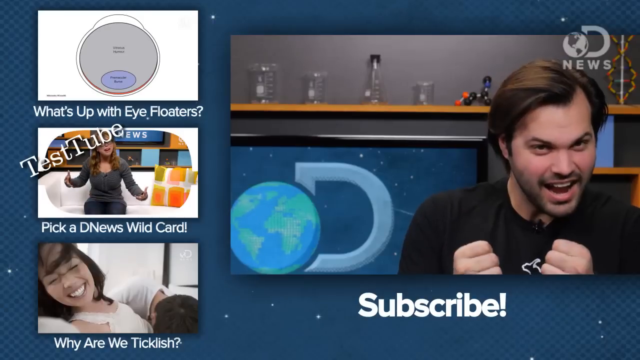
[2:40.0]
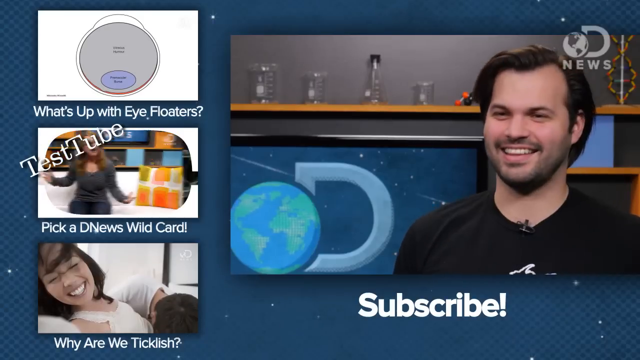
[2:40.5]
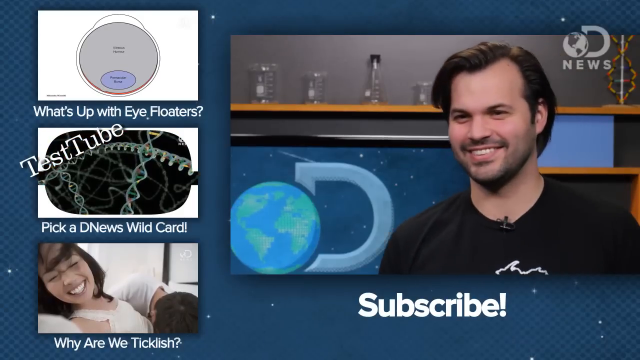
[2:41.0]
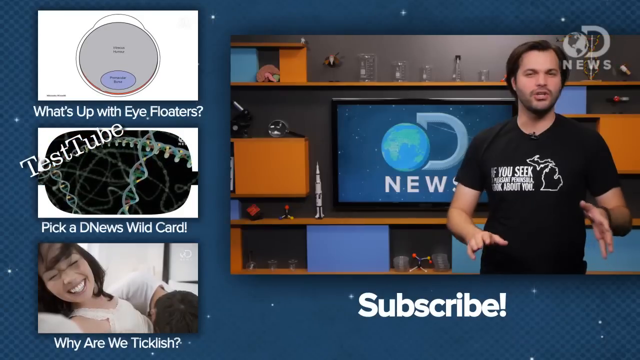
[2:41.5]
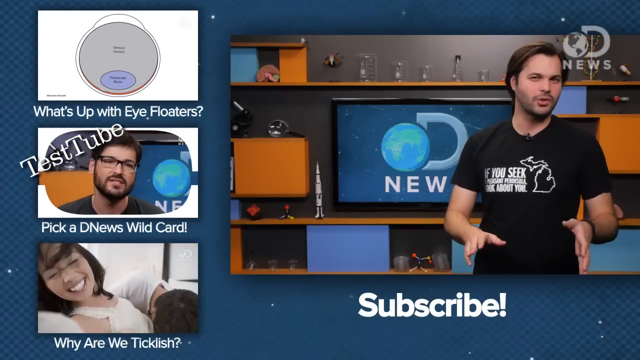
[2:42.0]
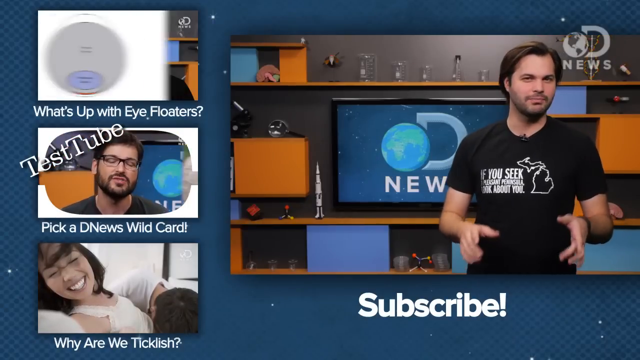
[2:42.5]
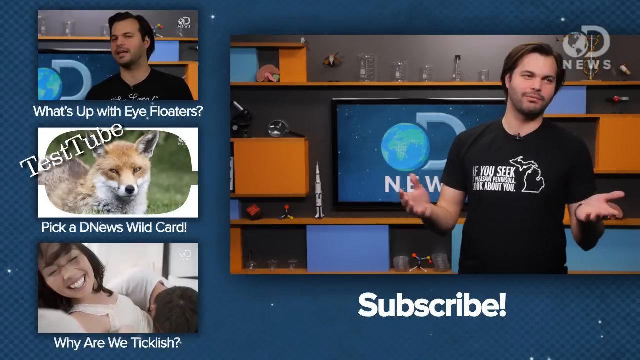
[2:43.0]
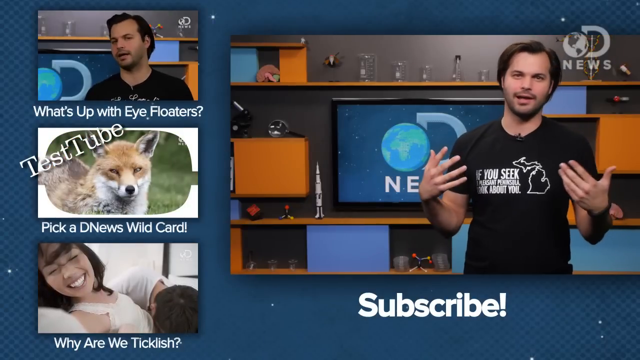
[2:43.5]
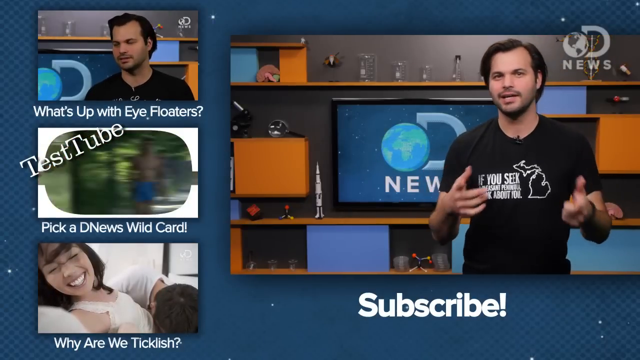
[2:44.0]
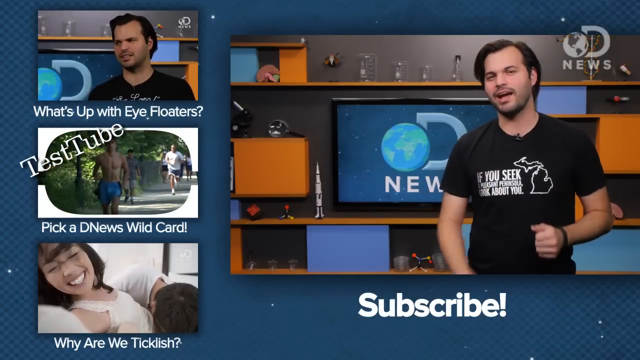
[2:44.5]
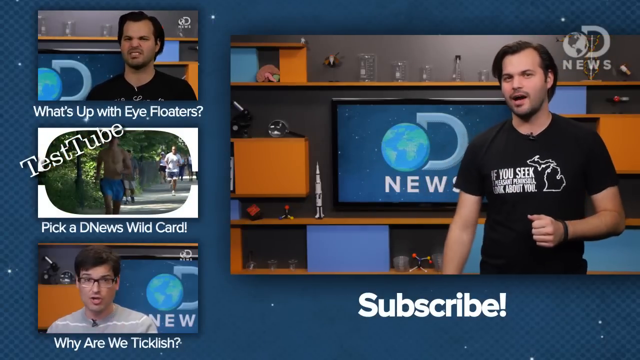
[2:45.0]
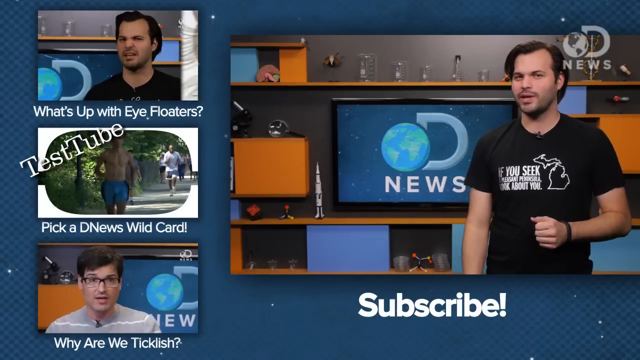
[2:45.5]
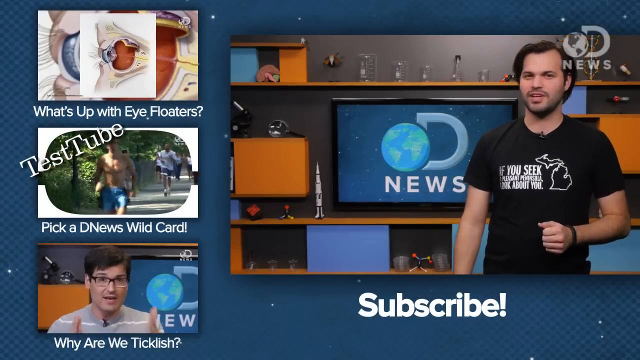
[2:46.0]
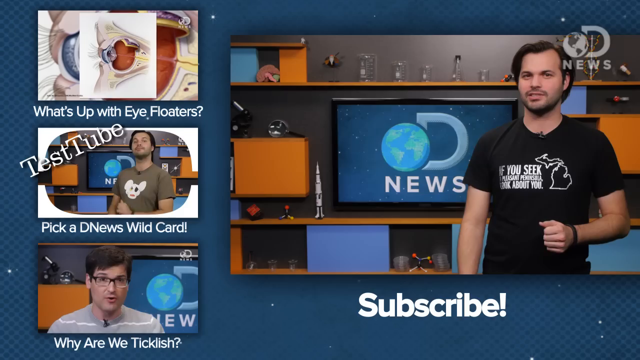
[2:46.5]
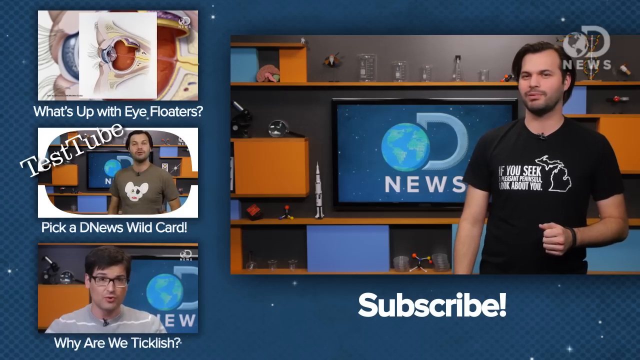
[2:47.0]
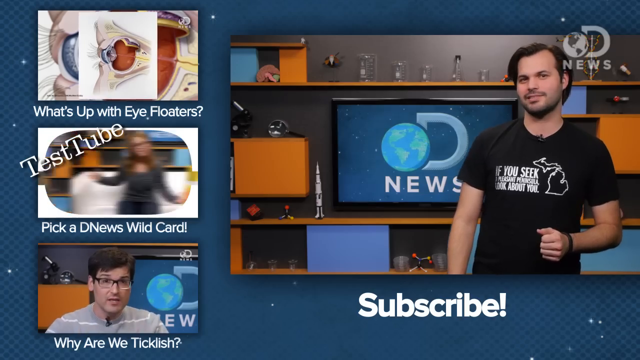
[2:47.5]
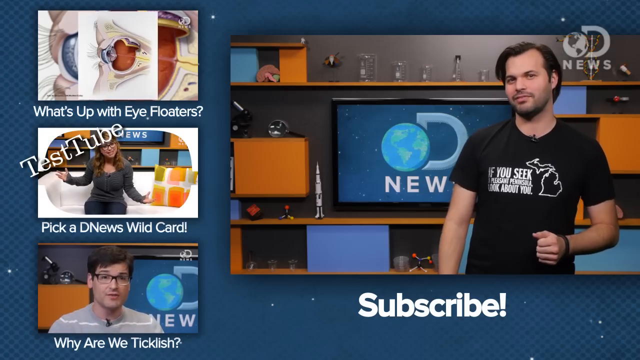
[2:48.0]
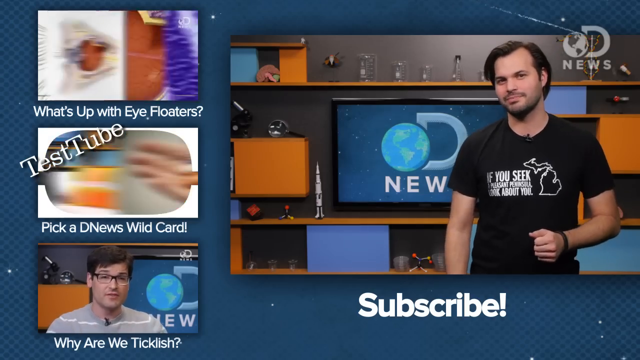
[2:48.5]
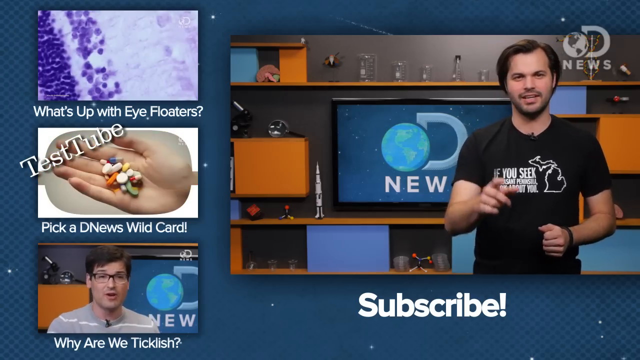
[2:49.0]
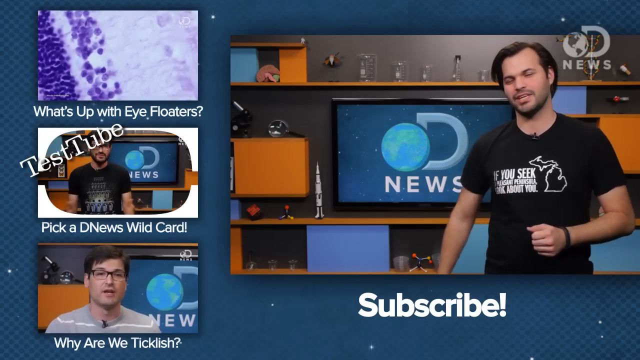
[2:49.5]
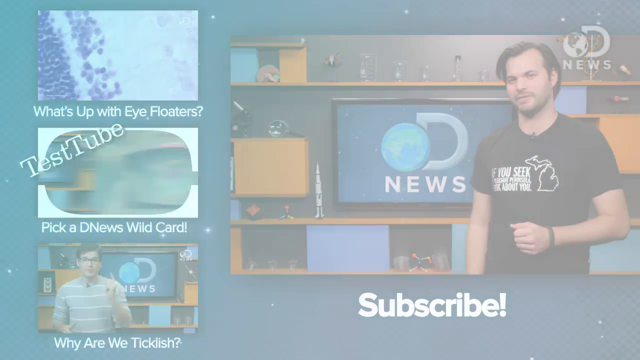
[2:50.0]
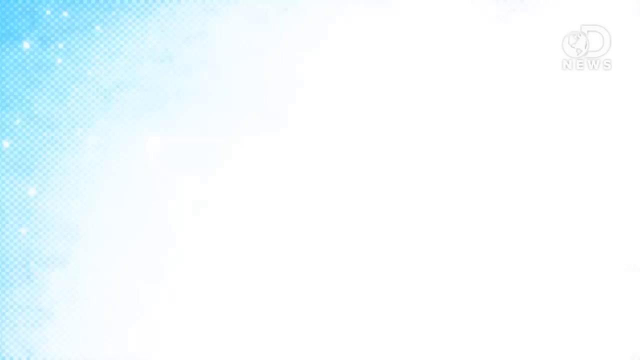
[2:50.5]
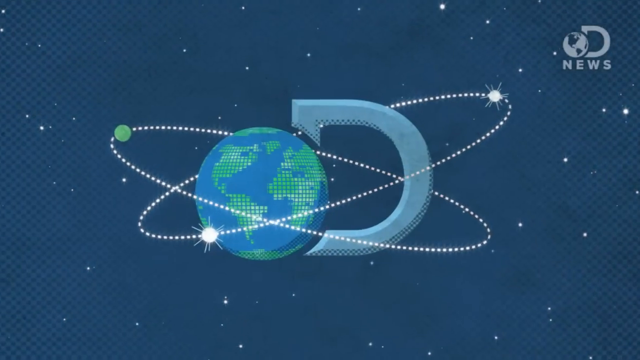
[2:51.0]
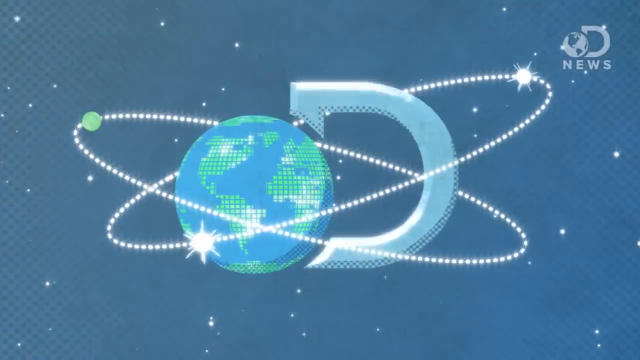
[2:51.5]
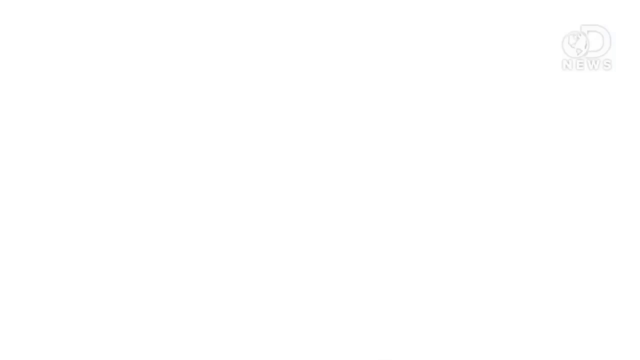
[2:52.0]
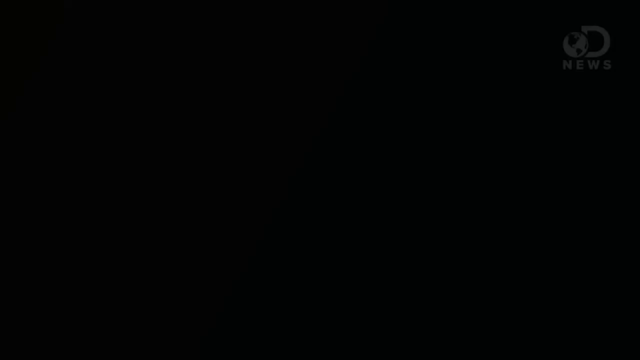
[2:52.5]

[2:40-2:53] Trace, on D News, stands in front of a digital background.